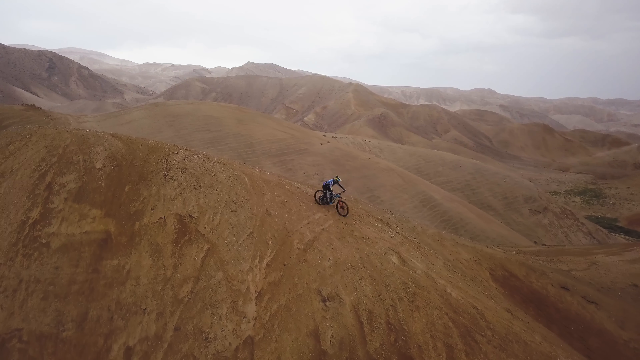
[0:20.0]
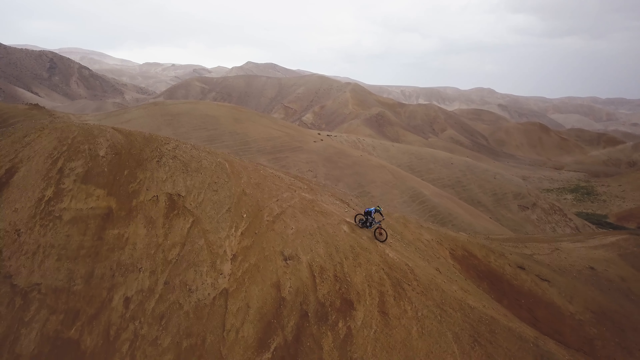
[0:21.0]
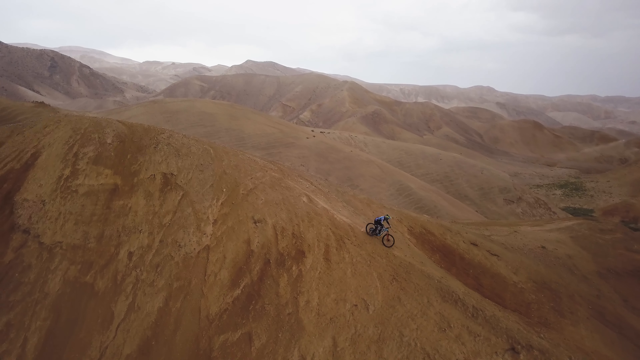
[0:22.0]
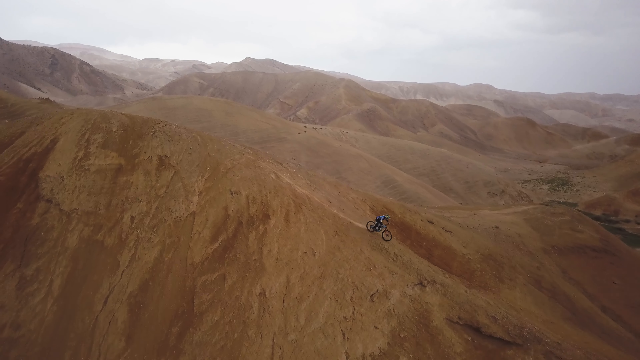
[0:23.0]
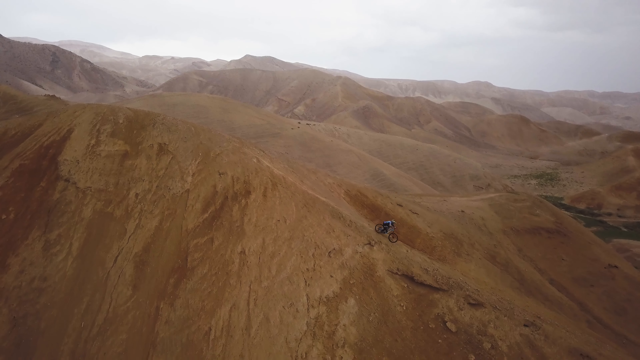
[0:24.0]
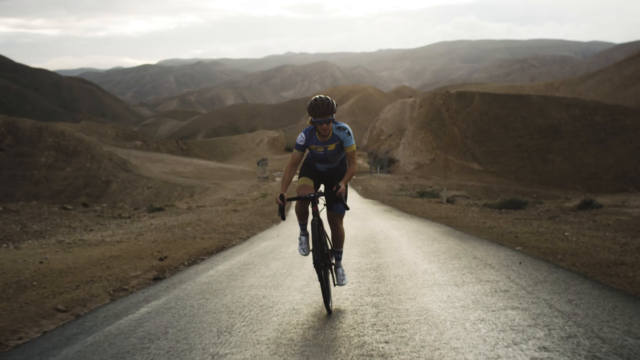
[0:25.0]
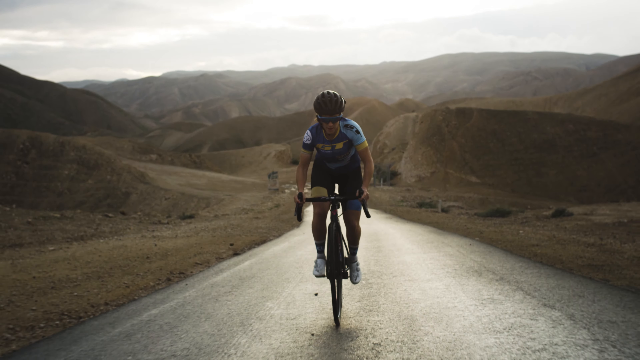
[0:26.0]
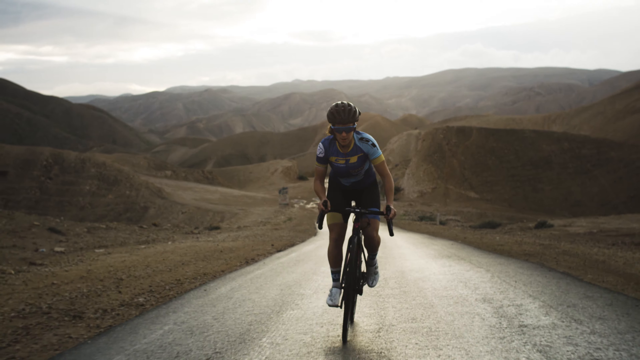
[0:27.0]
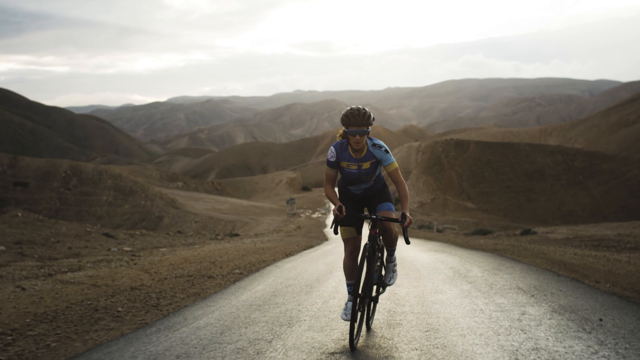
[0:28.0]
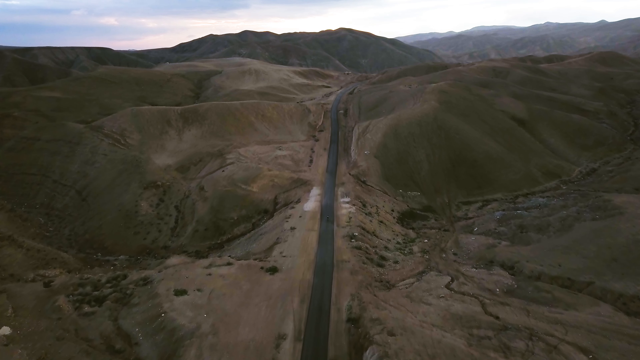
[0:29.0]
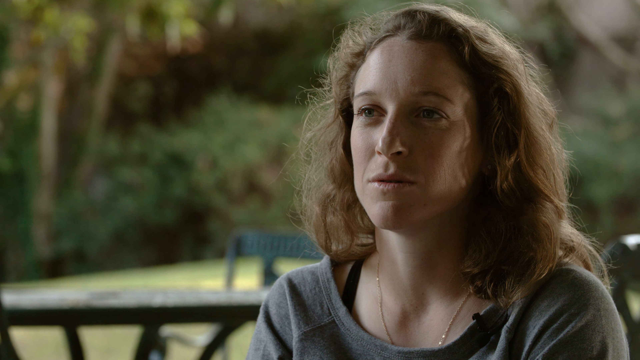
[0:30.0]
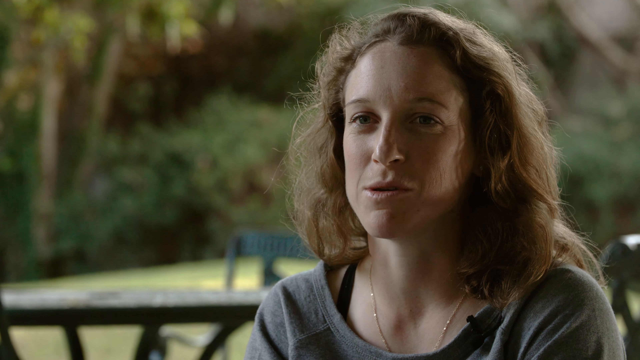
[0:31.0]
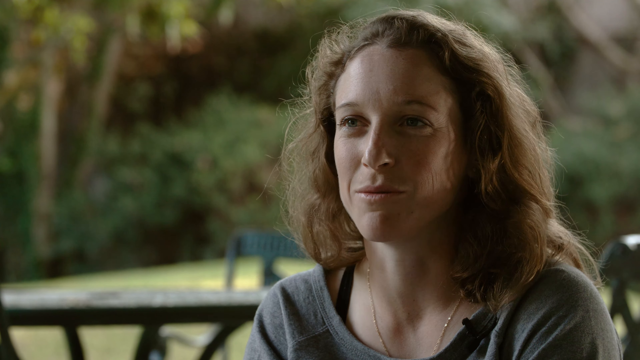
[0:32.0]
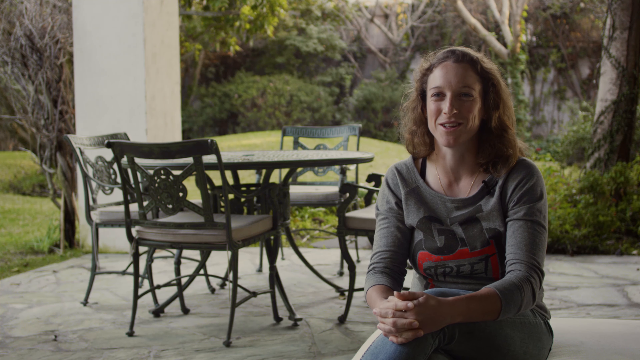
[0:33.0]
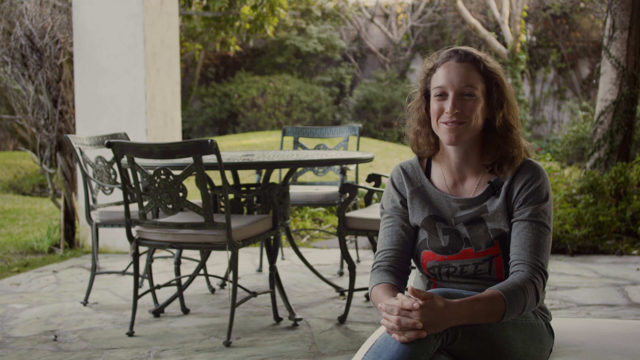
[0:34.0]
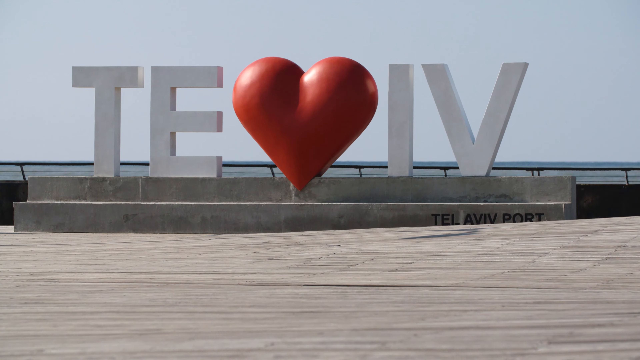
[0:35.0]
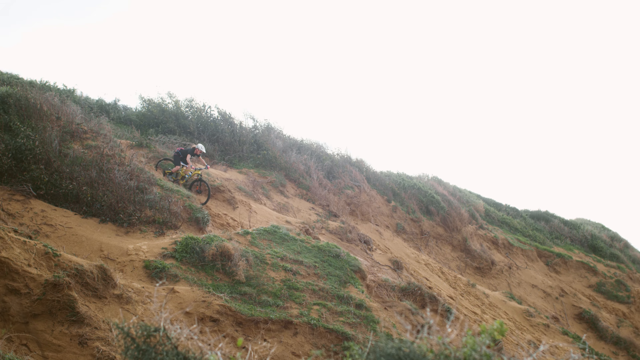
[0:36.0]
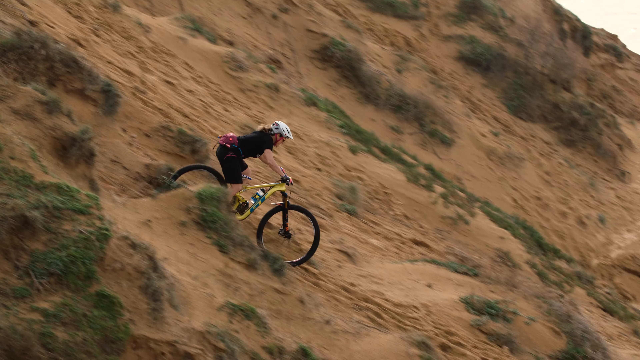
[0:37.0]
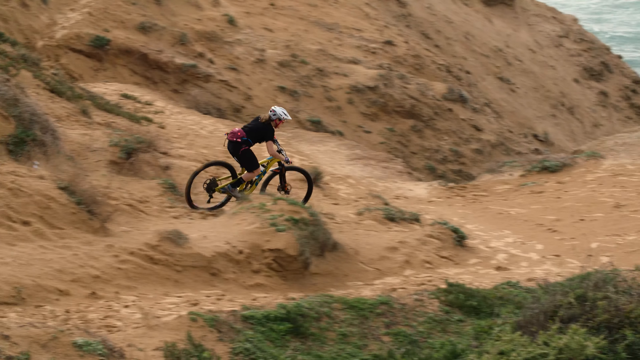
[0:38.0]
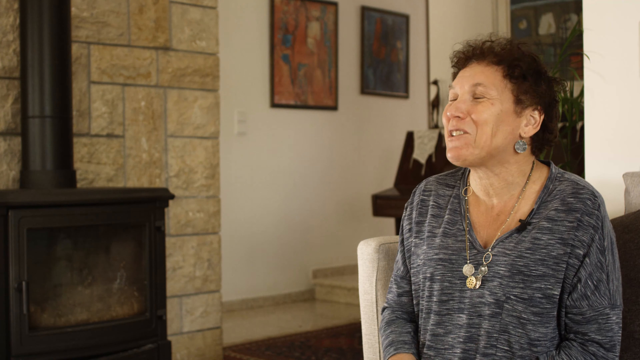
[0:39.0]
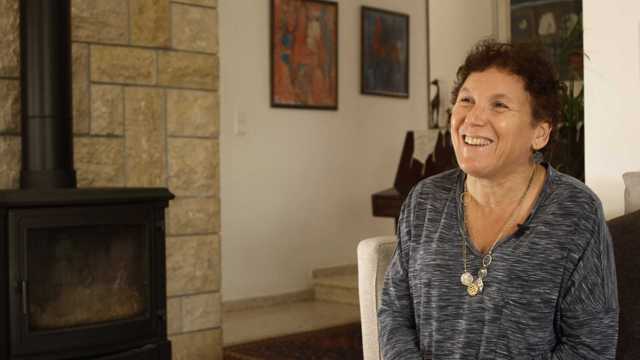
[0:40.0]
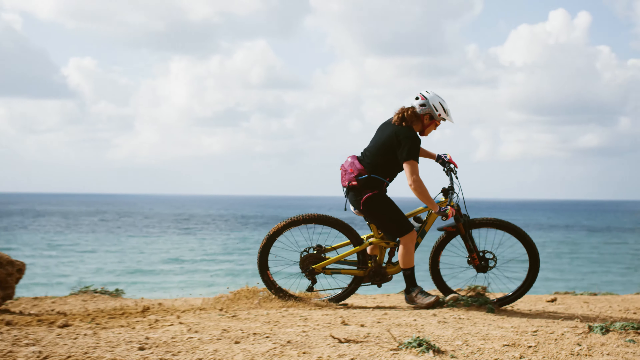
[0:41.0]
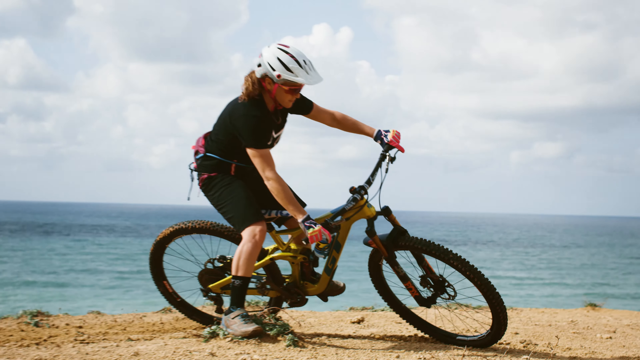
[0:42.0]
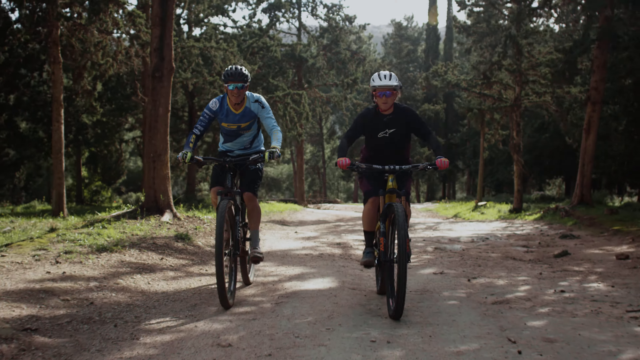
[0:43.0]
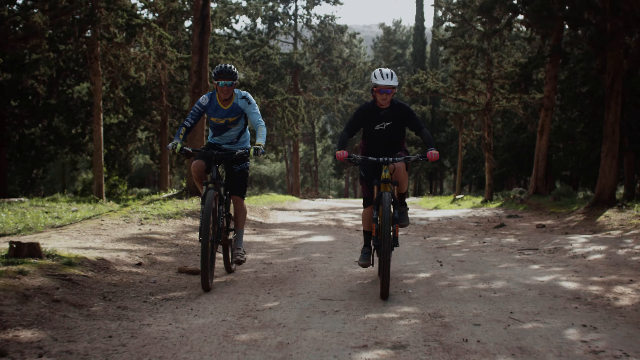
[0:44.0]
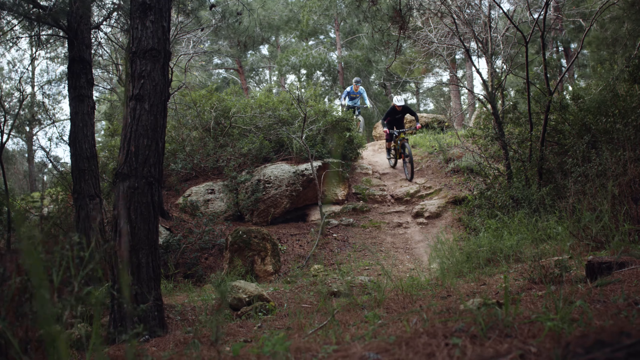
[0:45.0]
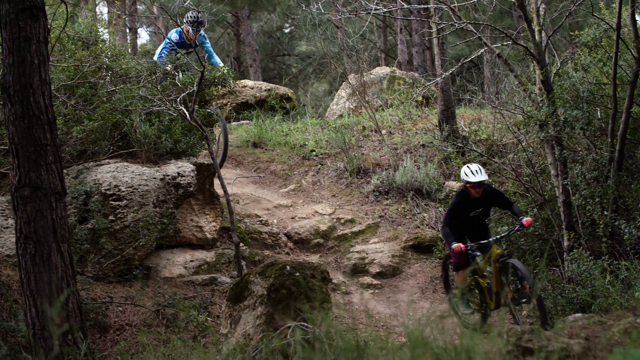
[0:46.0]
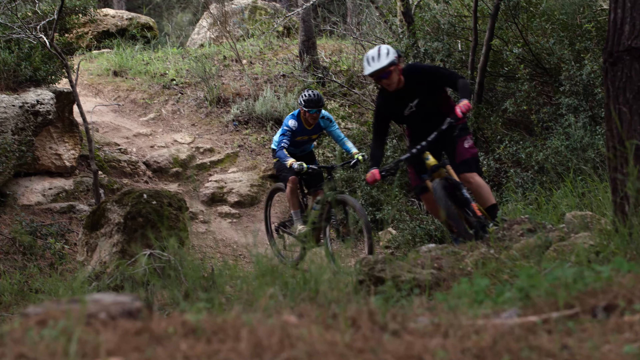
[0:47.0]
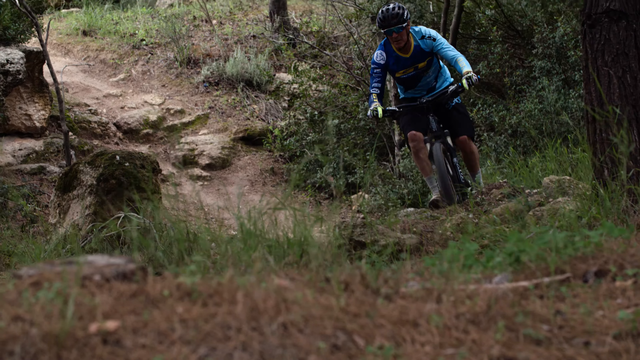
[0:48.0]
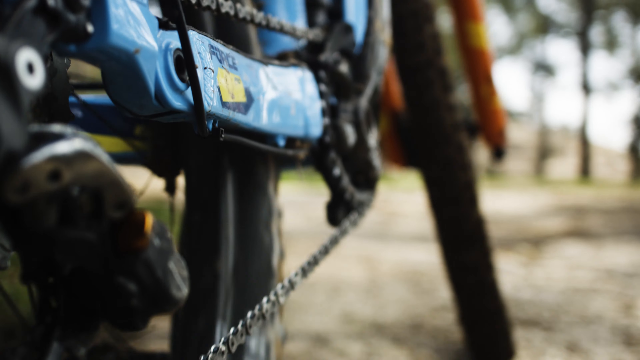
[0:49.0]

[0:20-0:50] In a third-person view, the person rides down the hilltop as the camera pulls away as though from a helicopter. The hill is tall, maybe a small mountain, and made of kind of brown dirt. The rider, very small in the frame, slopes down to the right. Another view shows a bicyclist riding toward the camera on a paved road in the middle of nowhere, with hills on the horizon and no trees or greenery at all. The bike might be a non-dirt bike, more of a professional bike. The rider wears short, tight sports pants and a helmet and is apparently a woman; the handlebars shift left and right as she rides toward the camera. A faraway upward view shows the road running through a rural hilltop area, apparently the same road she was on. An interview follows, showing her from roughly the shoulders up, with long, kind of brown hair that comes down to her shoulders. She looks to be in her thirties and is on the right side of the frame, looking toward an unseen interviewer, outdoors. A second, wider view shows a patio table on an outdoor patio. A series of outdoor views passes too quickly to make out, followed by an outdoor view of her riding down a hilltop with some greenery. Another woman is interviewed; she looks older, has dark hair, and is possibly the mother. She is inside a house with a fireplace on the left and smiles as she talks to the interviewer. Several quick close-up views show two people riding dirt bikes outdoors on rocky paths and through areas surrounded by trees, going up and down hills.